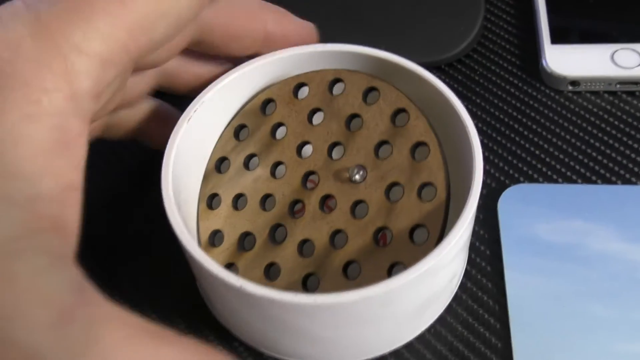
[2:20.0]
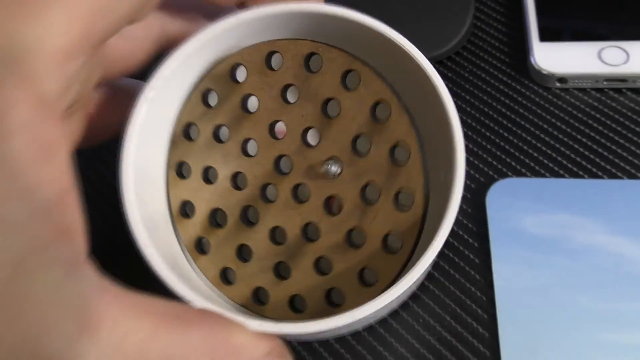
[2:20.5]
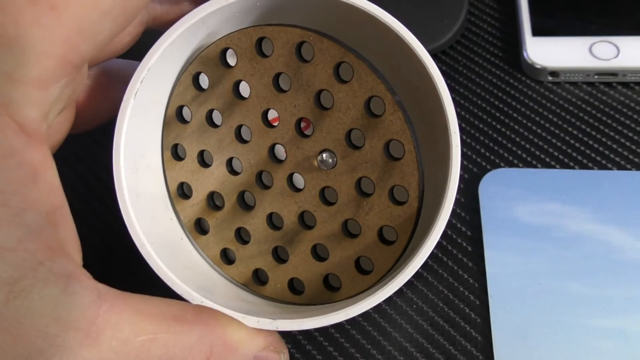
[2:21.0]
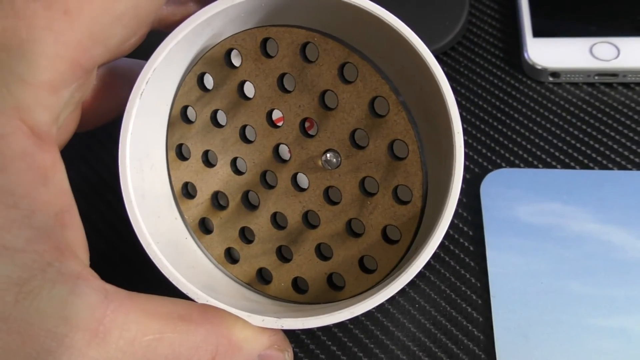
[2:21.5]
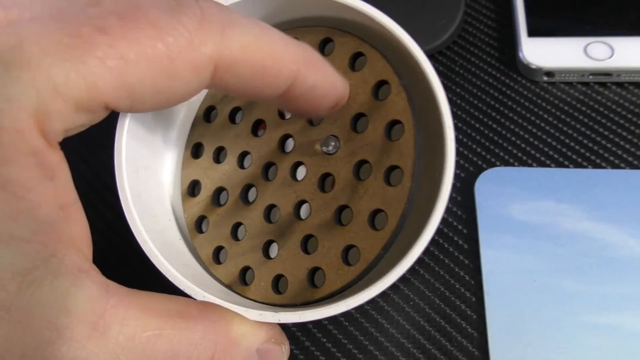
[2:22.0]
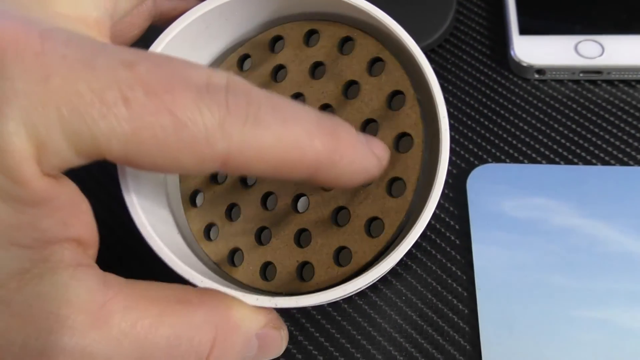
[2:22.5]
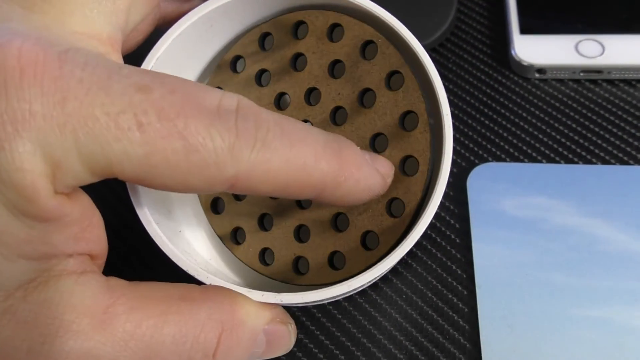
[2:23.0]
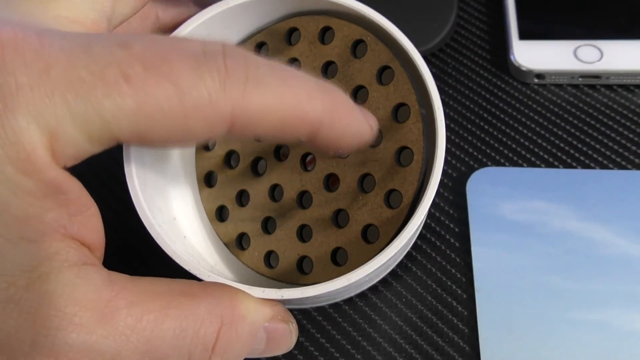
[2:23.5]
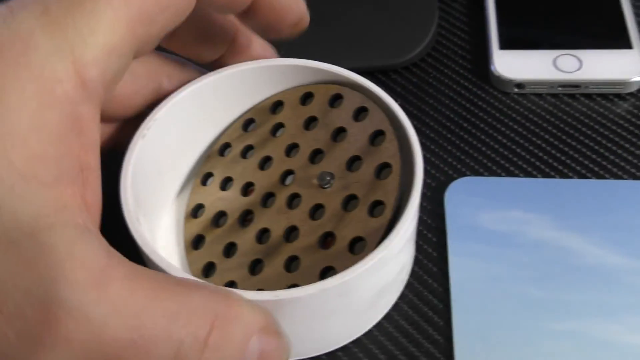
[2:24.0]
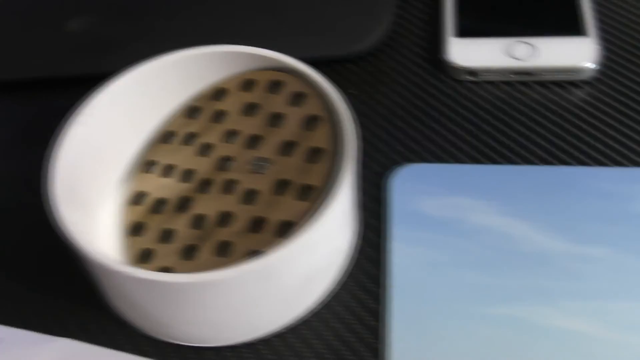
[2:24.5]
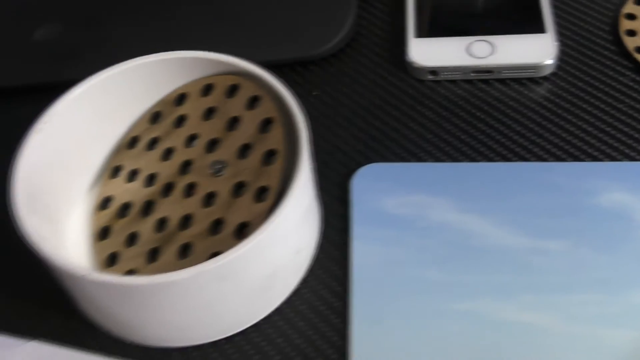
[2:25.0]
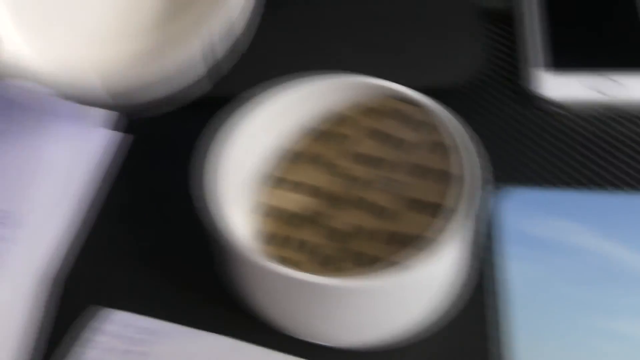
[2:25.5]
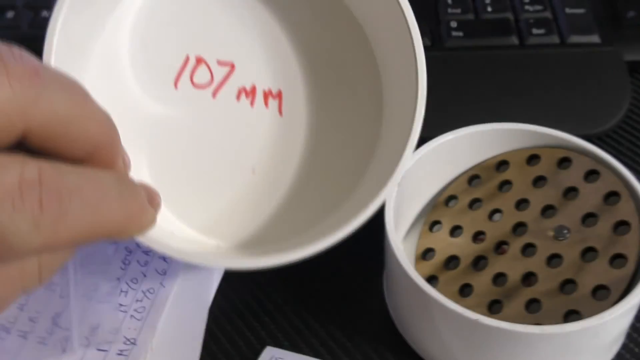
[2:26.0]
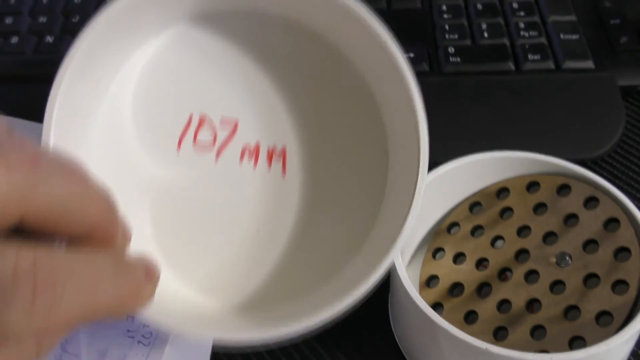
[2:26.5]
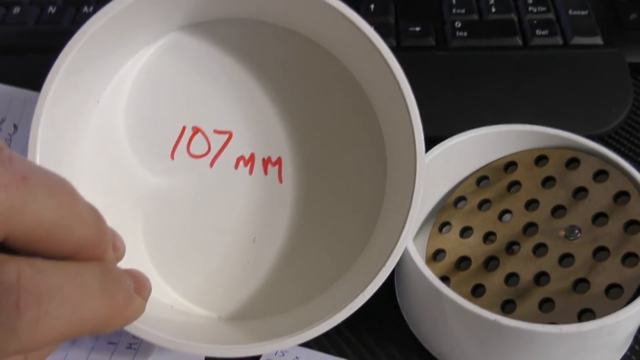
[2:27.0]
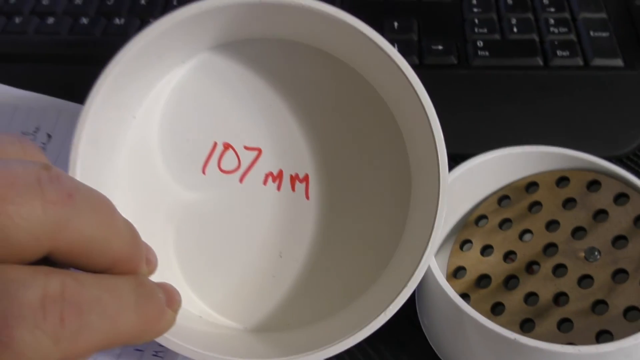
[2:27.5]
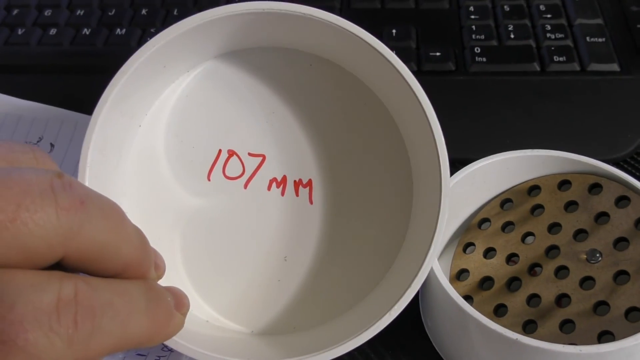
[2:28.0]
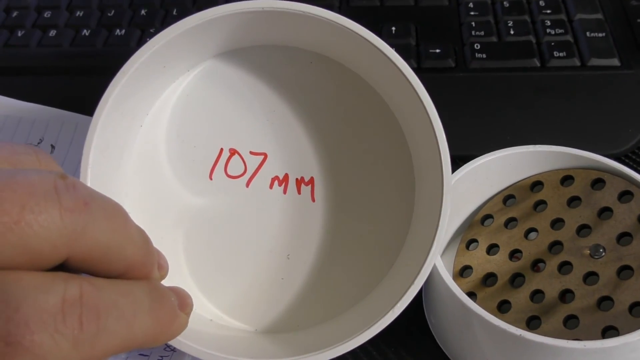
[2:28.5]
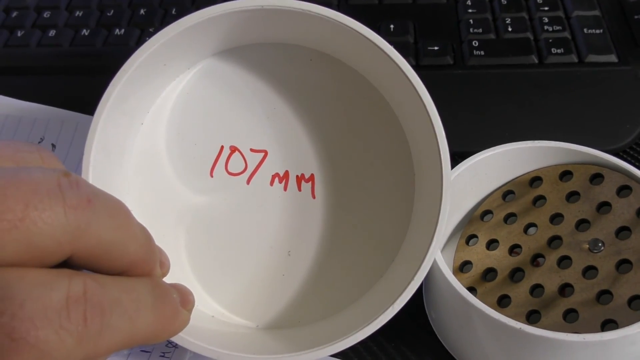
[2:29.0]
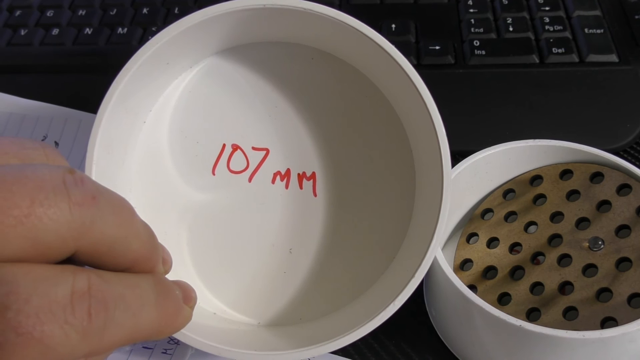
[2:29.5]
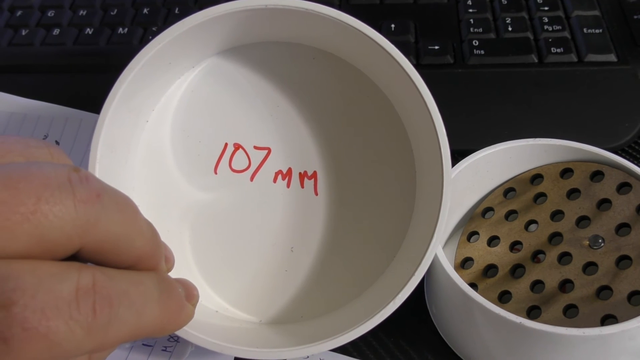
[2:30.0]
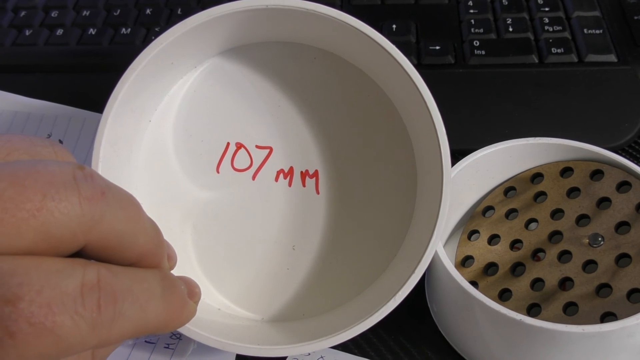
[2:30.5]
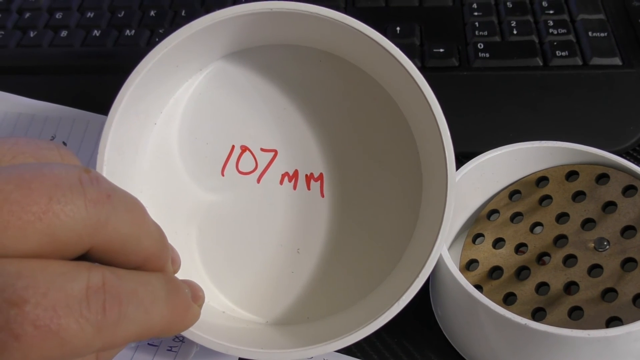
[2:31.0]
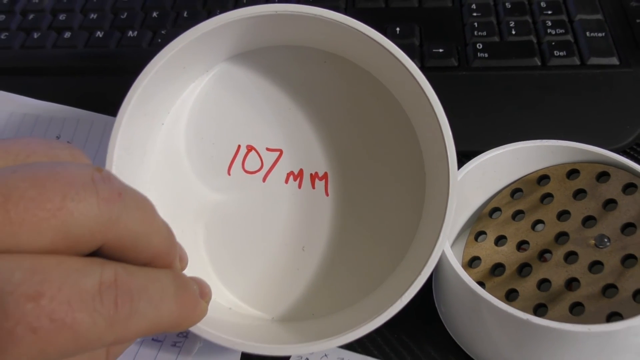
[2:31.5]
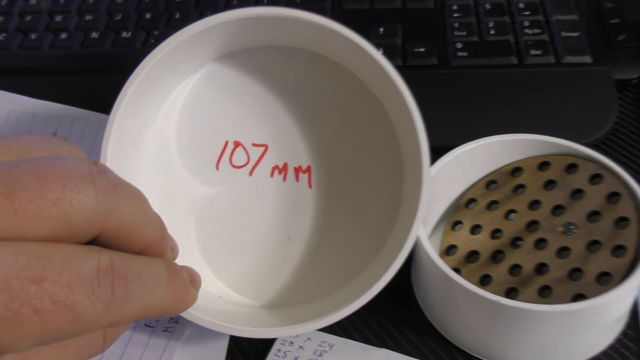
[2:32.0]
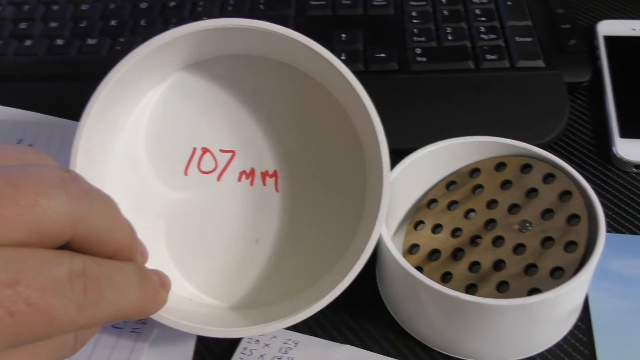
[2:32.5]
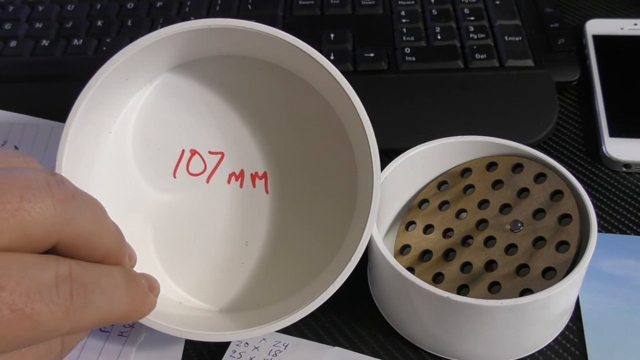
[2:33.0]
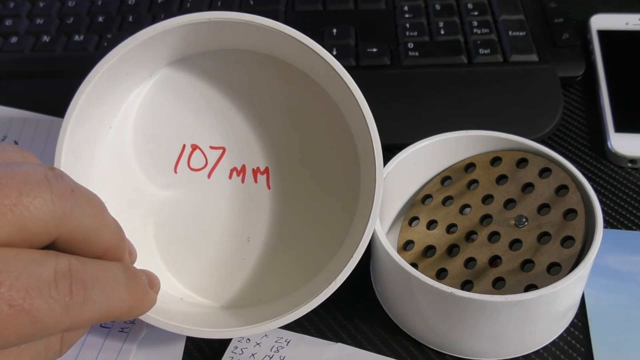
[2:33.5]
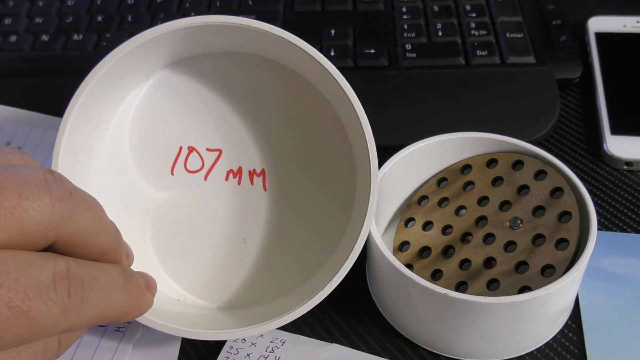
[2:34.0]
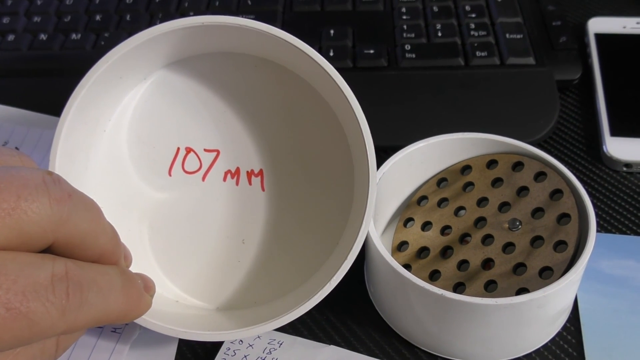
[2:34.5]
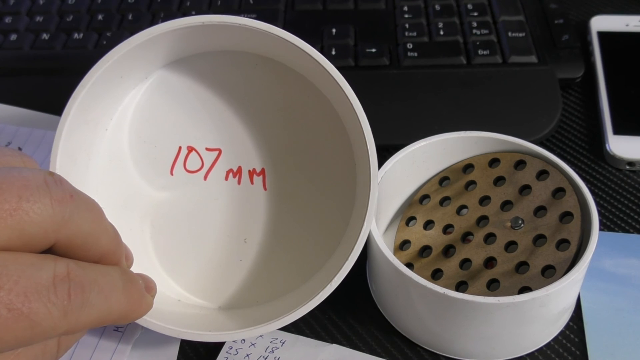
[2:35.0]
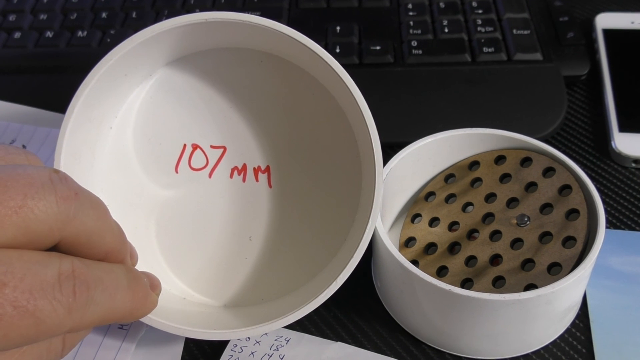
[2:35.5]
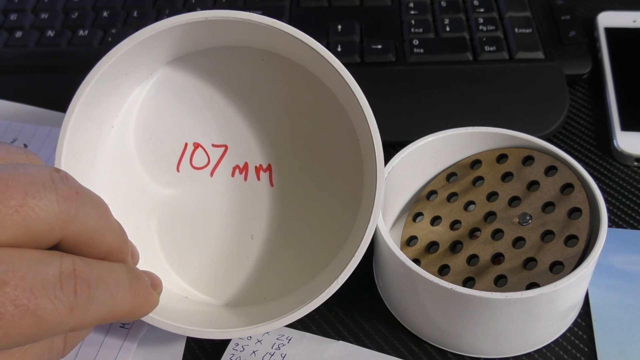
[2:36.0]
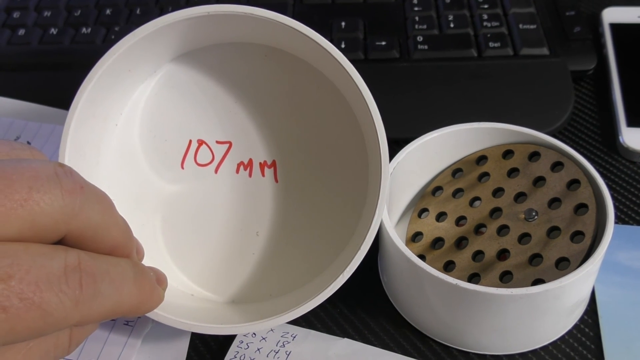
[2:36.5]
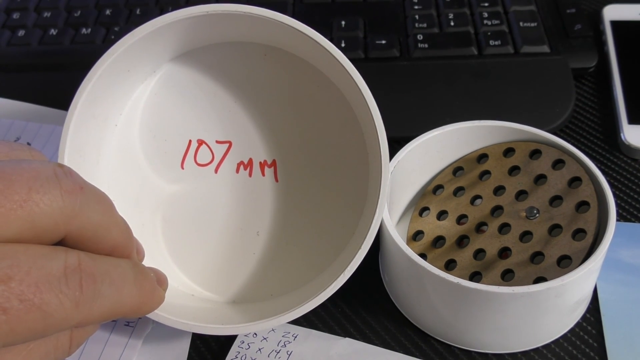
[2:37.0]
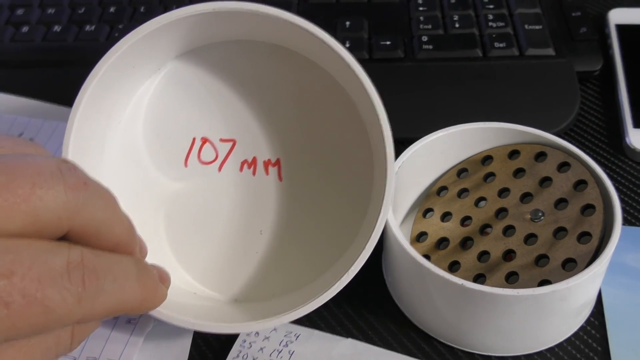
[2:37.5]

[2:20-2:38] The user's fingers hold the same 65 millimetre tumbler, which contains the brown board with what appears to be a light bulb in the center. Next to it, the user takes another tumbler marked "107 millimeters". He places the tumblers side by side and scrutinises them, places the small light bulb on the 107 millimetre tumbler, and holds them against each other, apparently comparing them. The camera zooms in on the light bulb in the center of the 65 millimetre tumbler, and the video ends there.